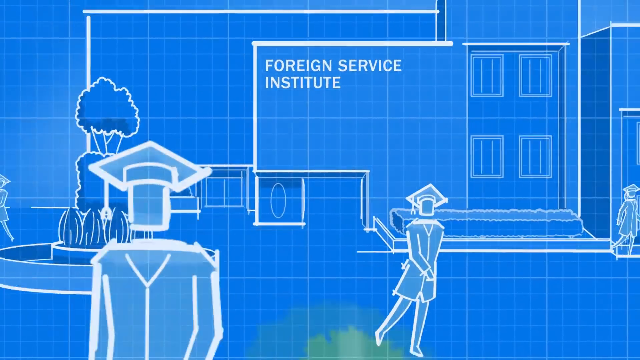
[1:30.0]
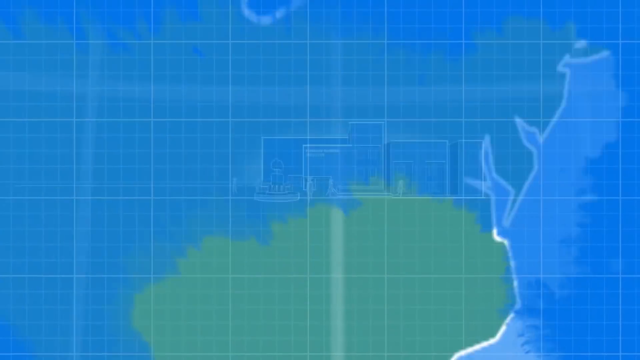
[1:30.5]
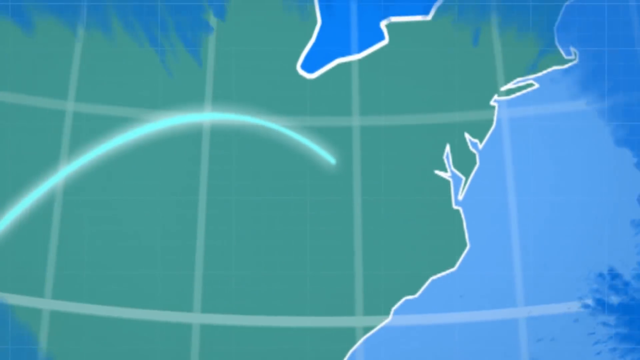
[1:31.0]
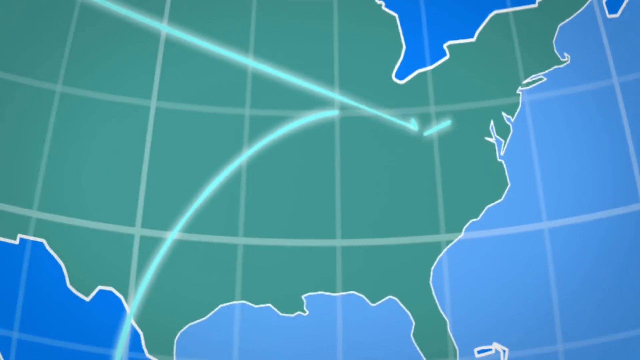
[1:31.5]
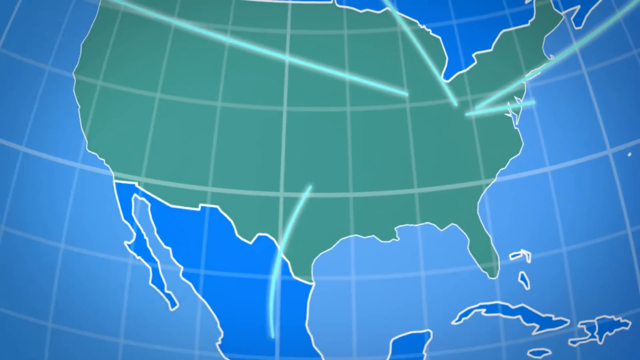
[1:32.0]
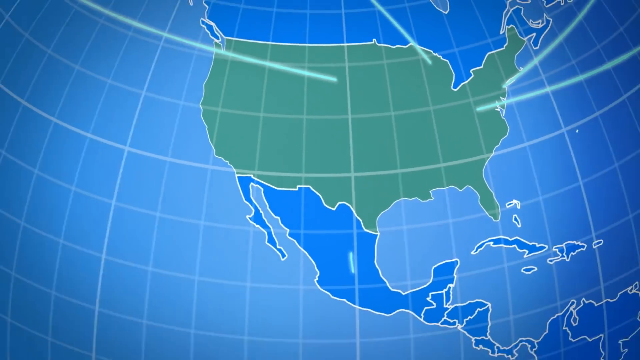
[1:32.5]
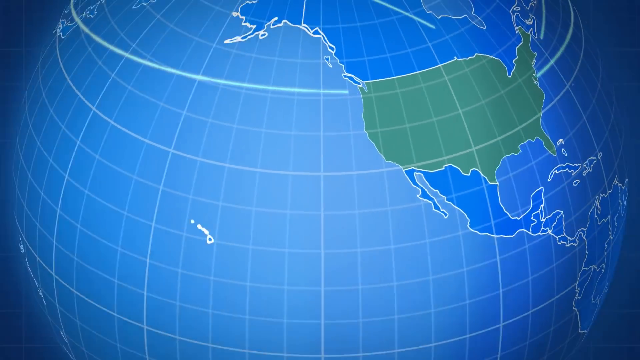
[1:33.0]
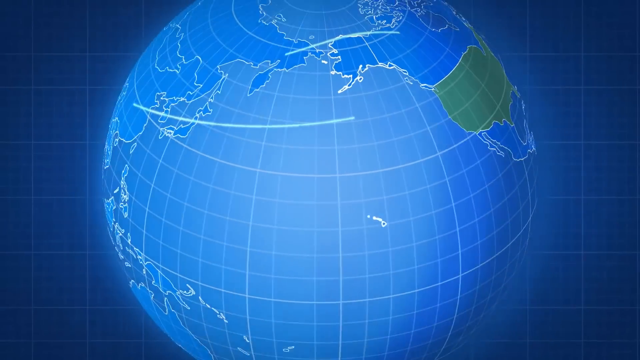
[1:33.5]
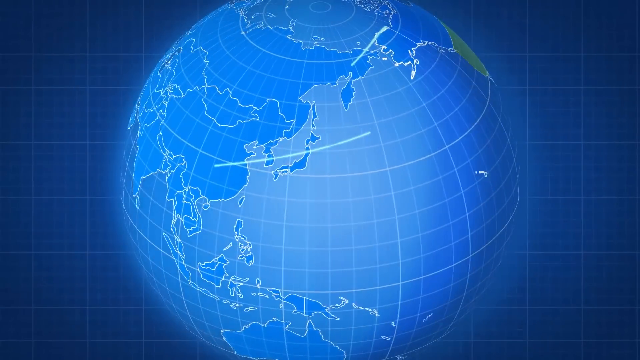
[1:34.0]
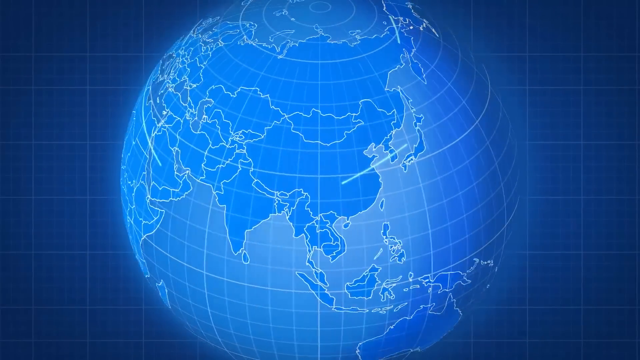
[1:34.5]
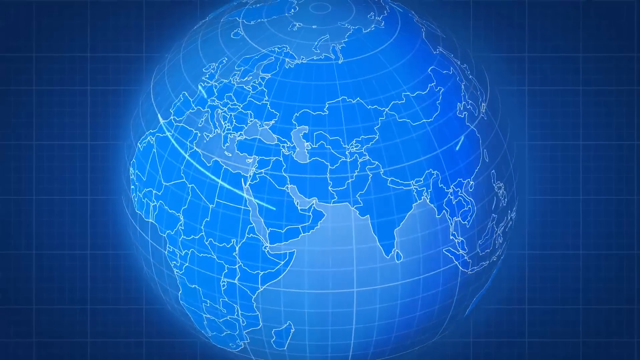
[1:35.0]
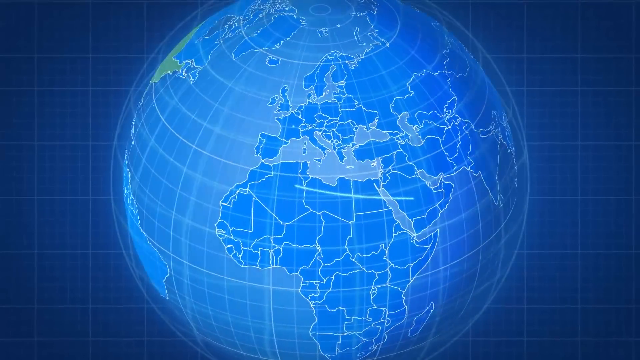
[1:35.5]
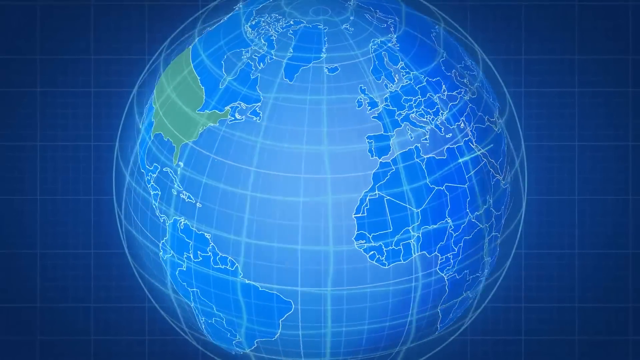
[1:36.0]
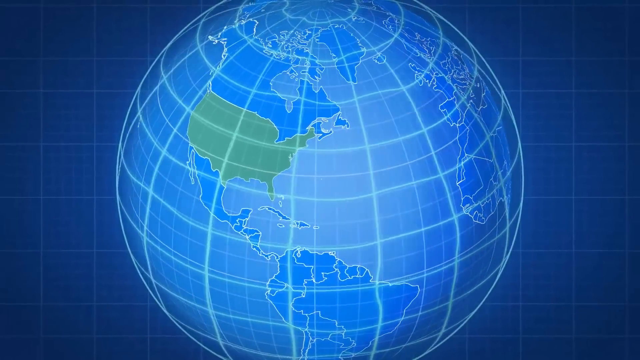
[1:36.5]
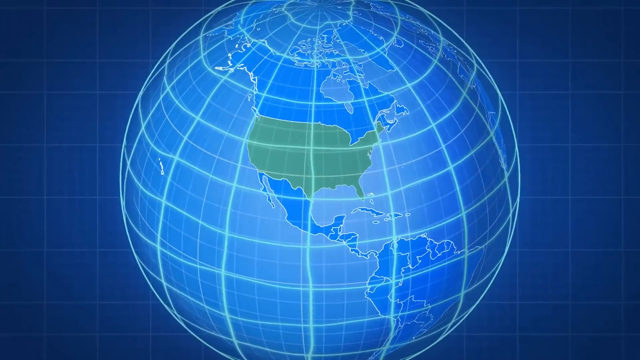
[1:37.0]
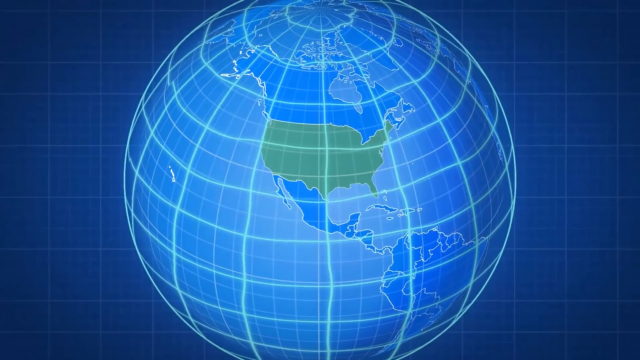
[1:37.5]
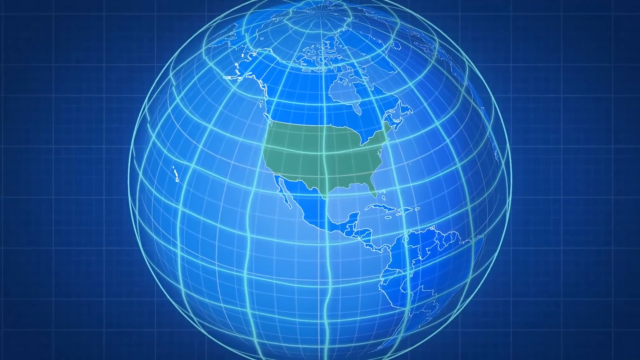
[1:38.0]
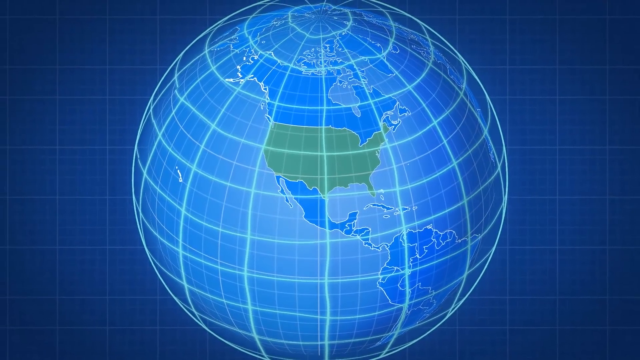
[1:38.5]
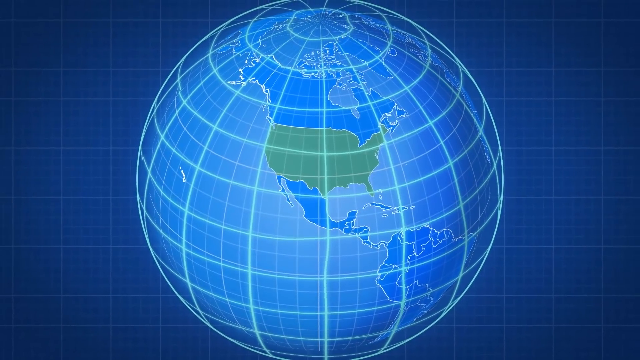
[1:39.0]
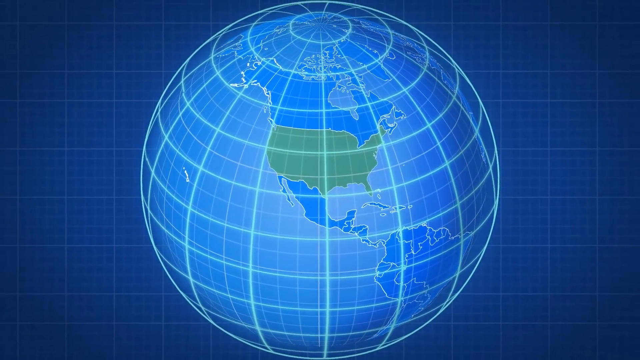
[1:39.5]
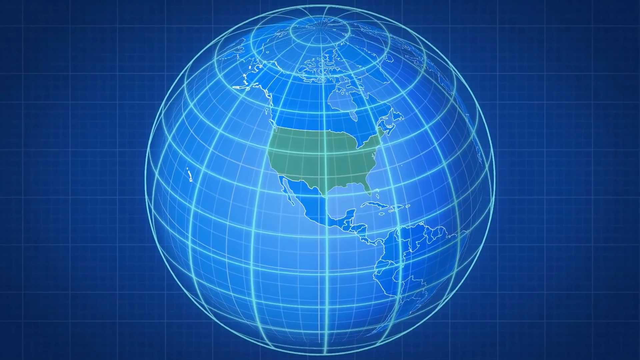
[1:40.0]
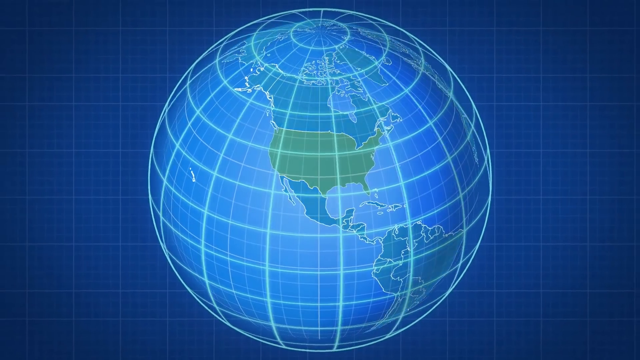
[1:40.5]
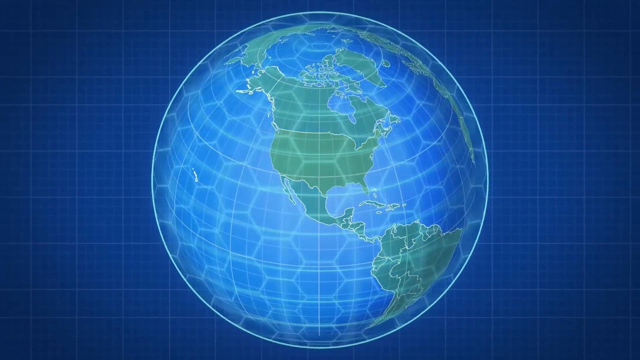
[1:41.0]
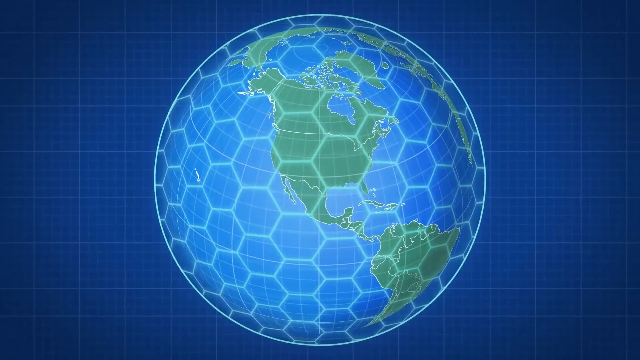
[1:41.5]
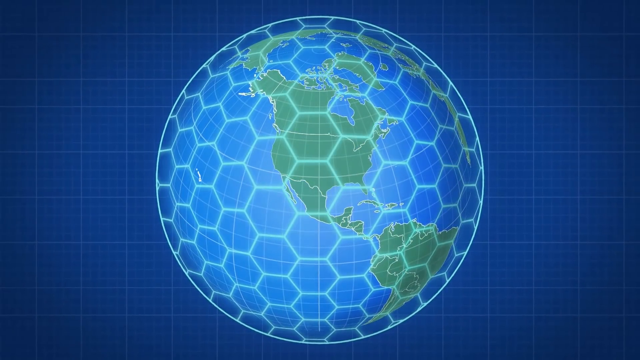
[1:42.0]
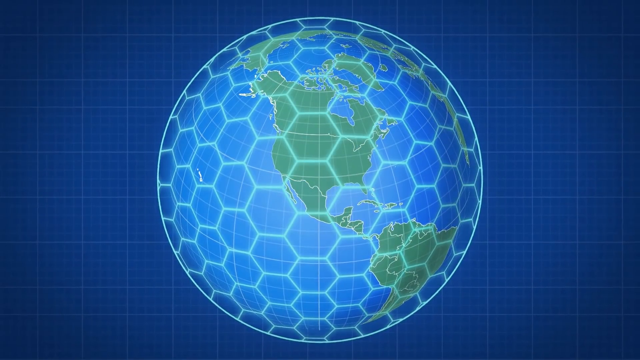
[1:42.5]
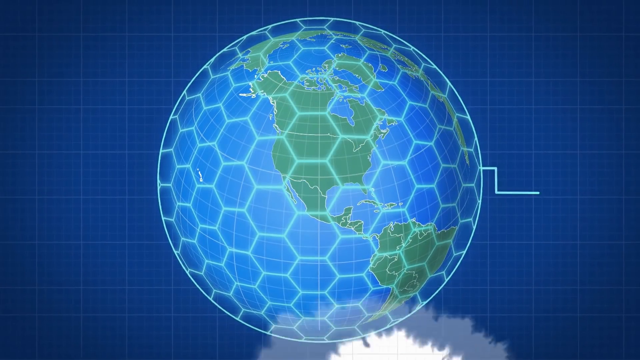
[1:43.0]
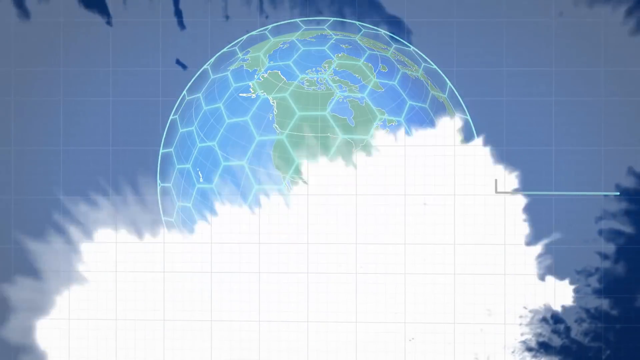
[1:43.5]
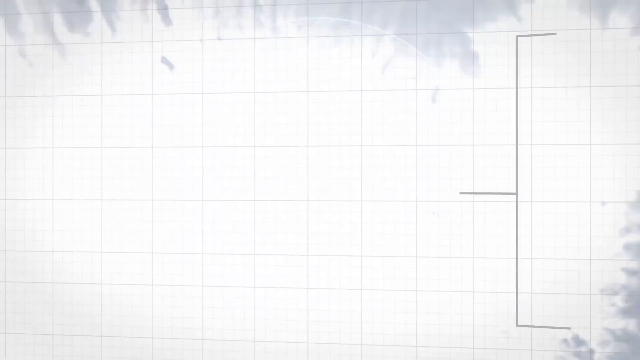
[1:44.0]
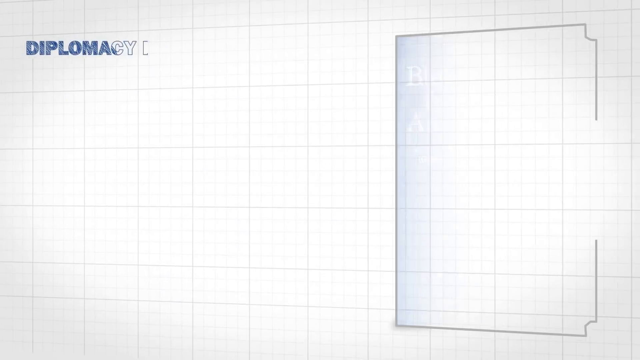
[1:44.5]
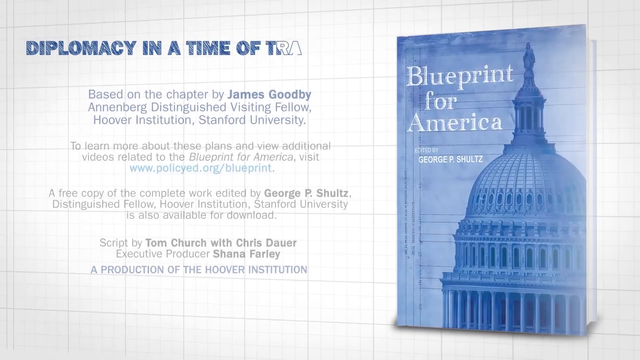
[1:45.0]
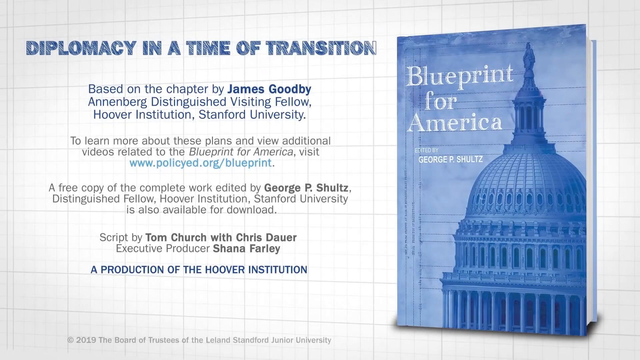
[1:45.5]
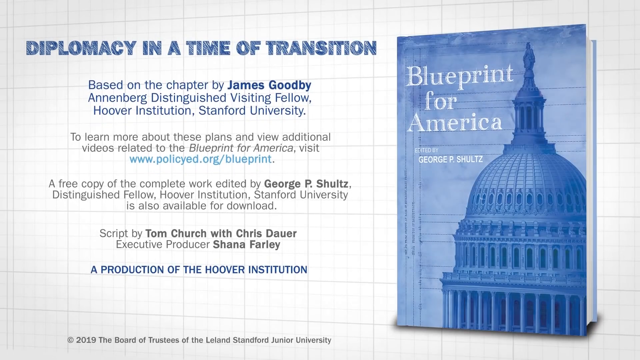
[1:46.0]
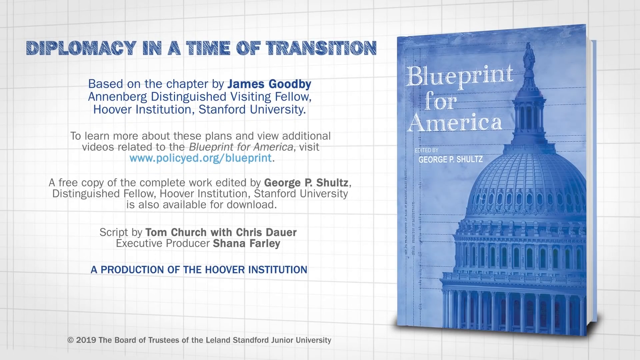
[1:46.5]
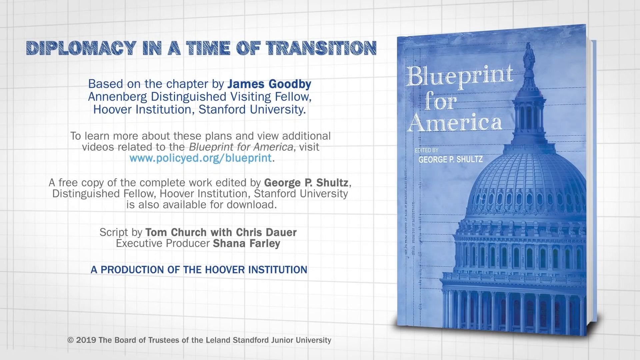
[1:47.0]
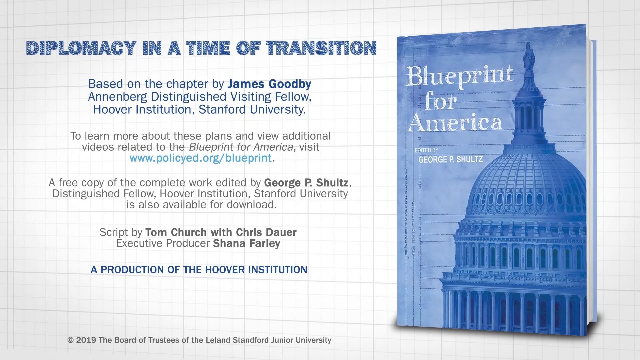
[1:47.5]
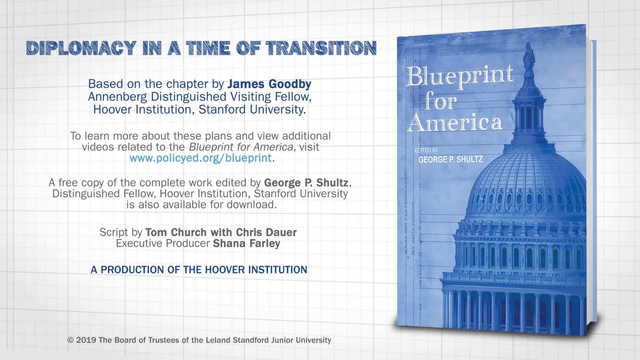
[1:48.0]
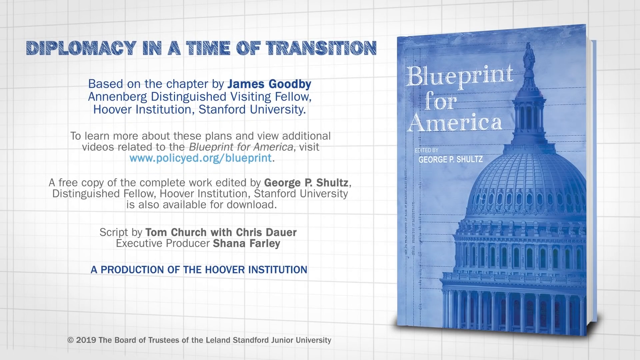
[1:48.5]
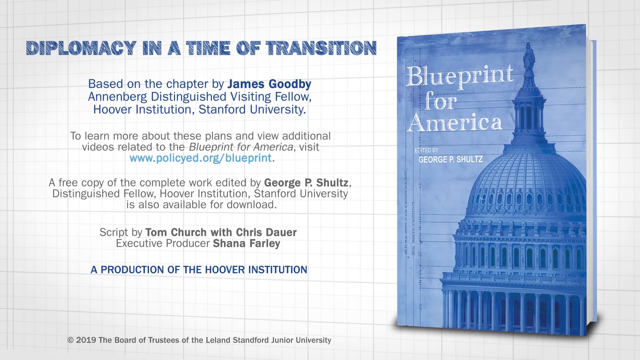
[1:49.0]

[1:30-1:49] The United States appears with green lines shooting out and landing in different countries. The view then zooms far out from the globe, which is spinning. Text reads "democracy in a time of transition" and "Blueprint for America," and a book says "Blueprint for America." Further text reads "based on a chapter by James Goodby, the distinguished visiting fellow of Hoover Institute, Stanford University" and "To learn more about these plans and view additional video related to the Blueprint for America visit," followed by a link. Another line reads "A free copy of the complete work edited by George P. Schwartz, the distinguished fellow is also available for download." Credits list a script by Tom Church with Chris and executive producer Shannon Ferris.